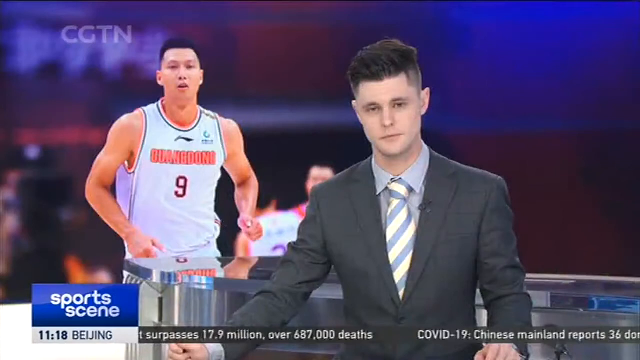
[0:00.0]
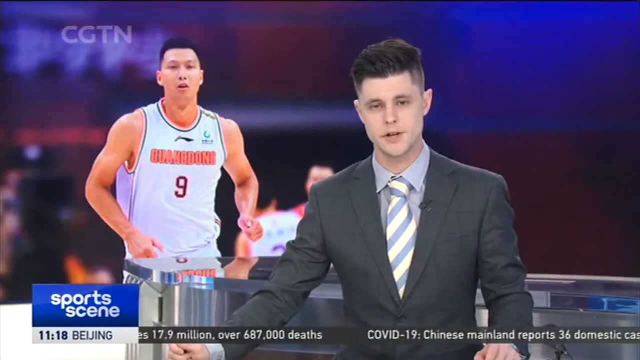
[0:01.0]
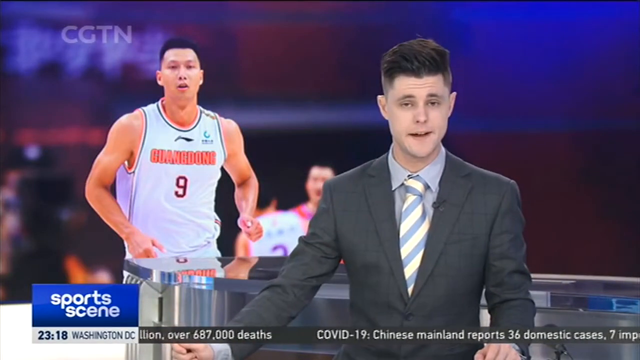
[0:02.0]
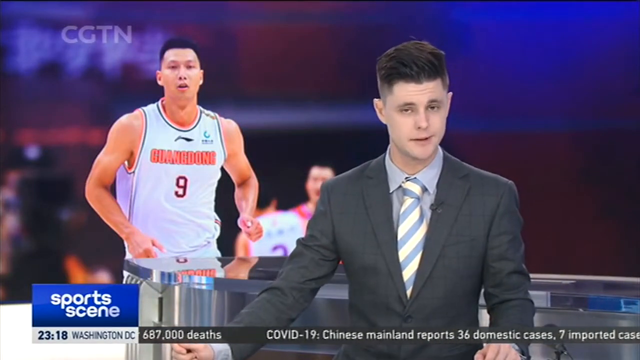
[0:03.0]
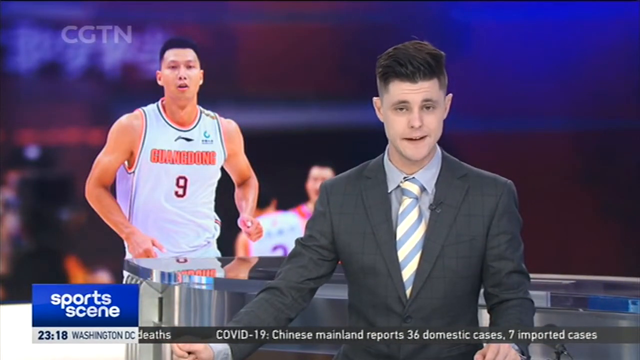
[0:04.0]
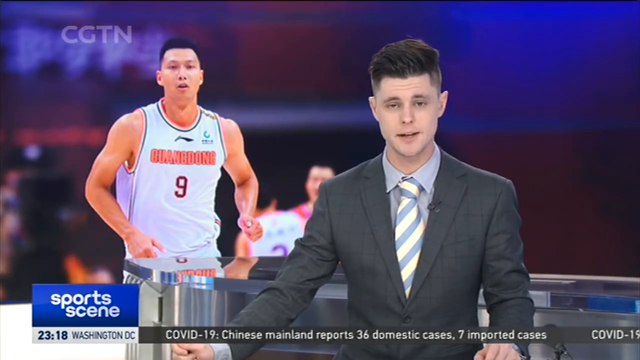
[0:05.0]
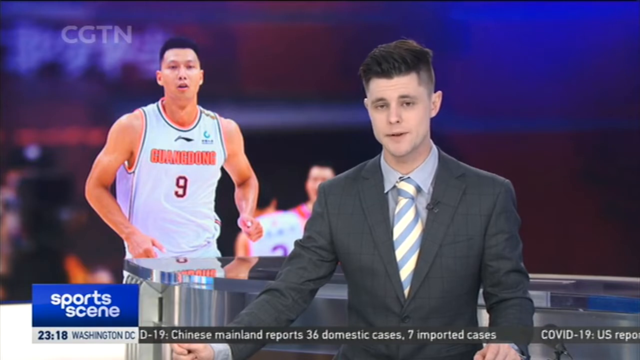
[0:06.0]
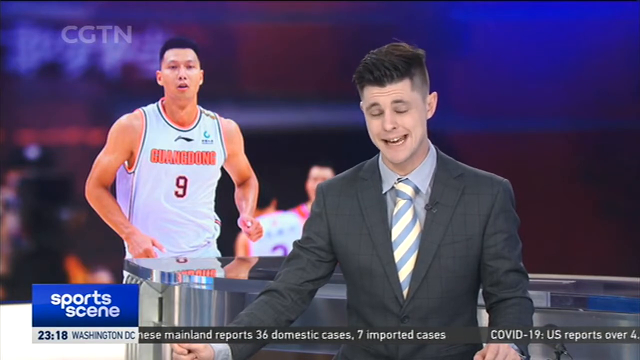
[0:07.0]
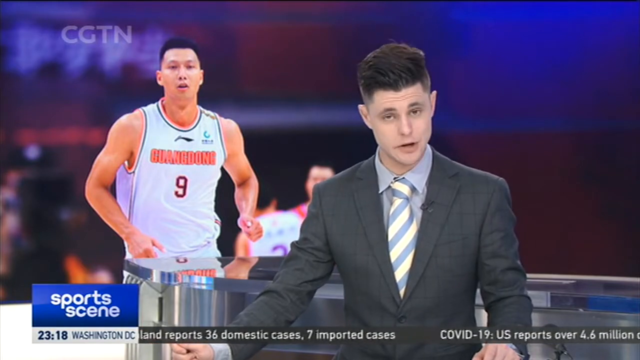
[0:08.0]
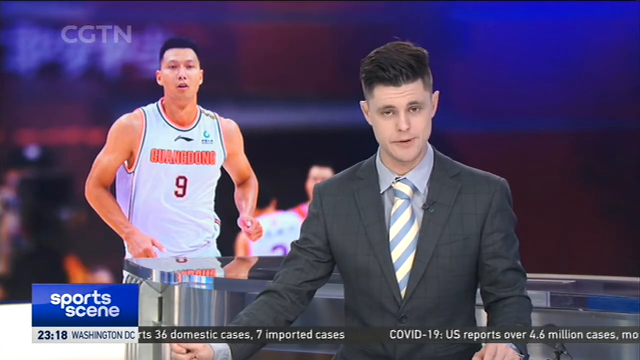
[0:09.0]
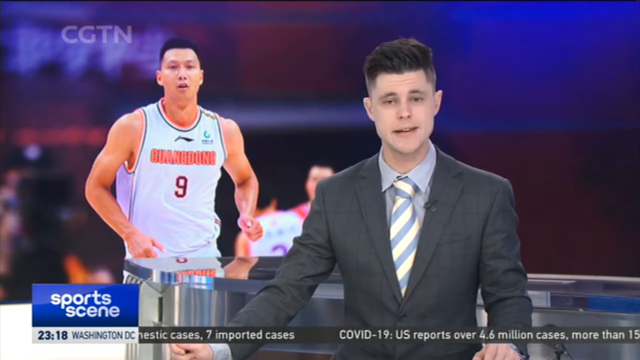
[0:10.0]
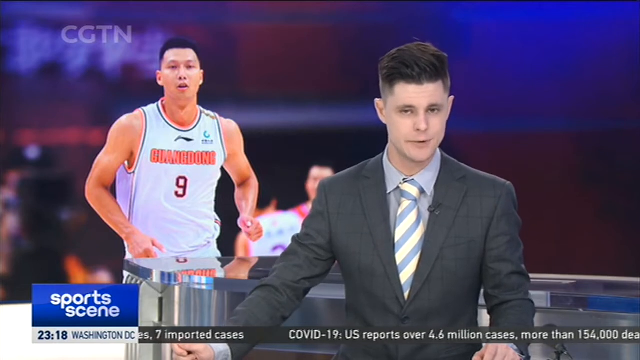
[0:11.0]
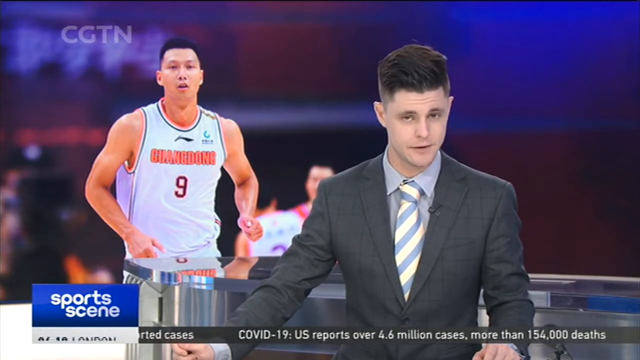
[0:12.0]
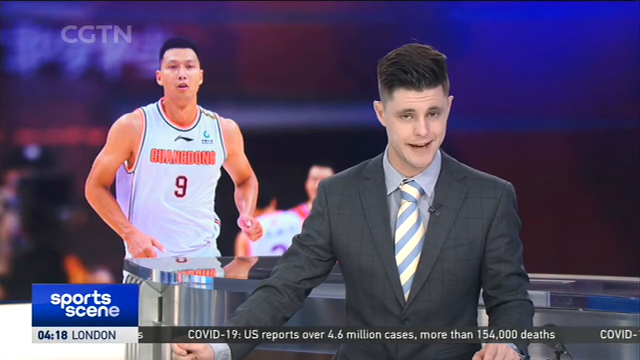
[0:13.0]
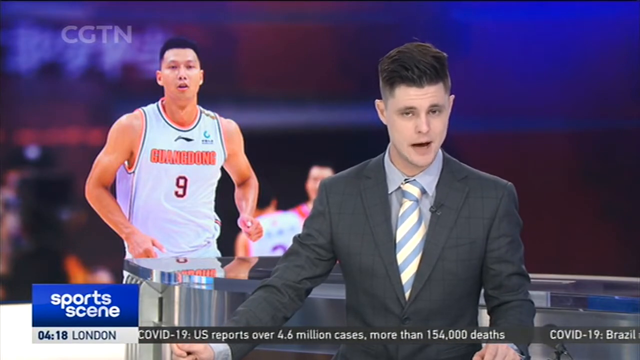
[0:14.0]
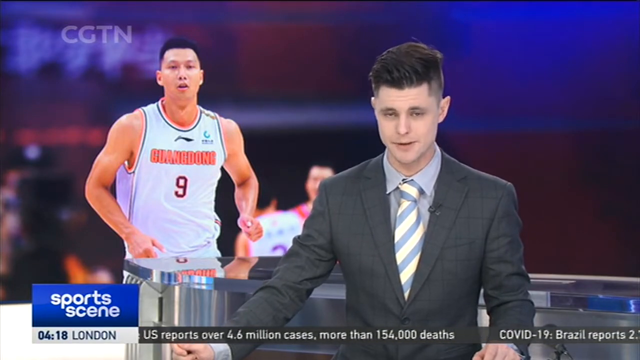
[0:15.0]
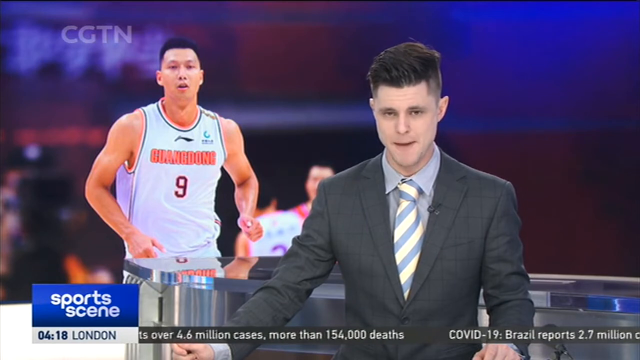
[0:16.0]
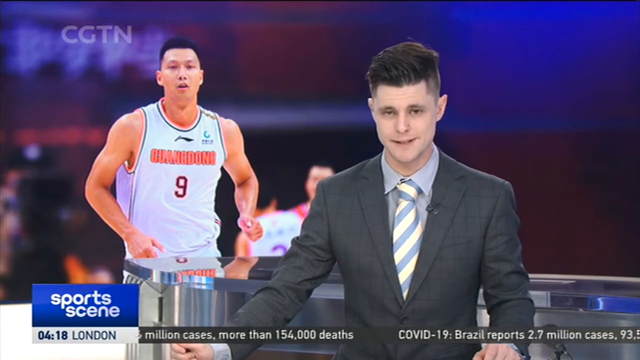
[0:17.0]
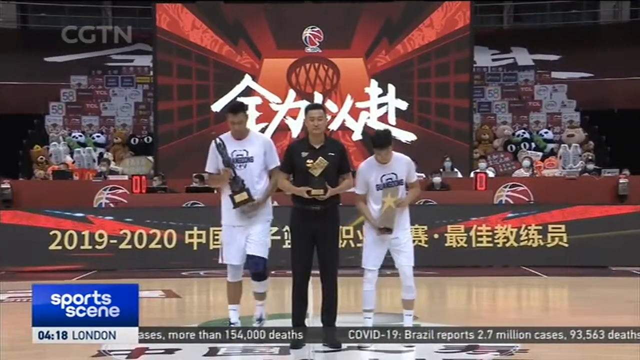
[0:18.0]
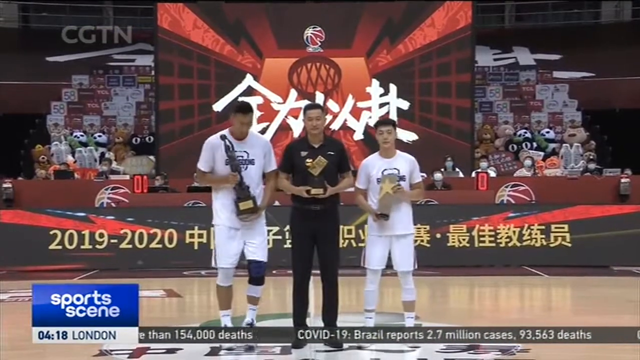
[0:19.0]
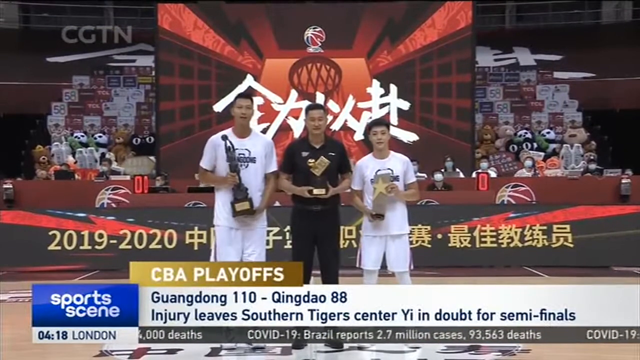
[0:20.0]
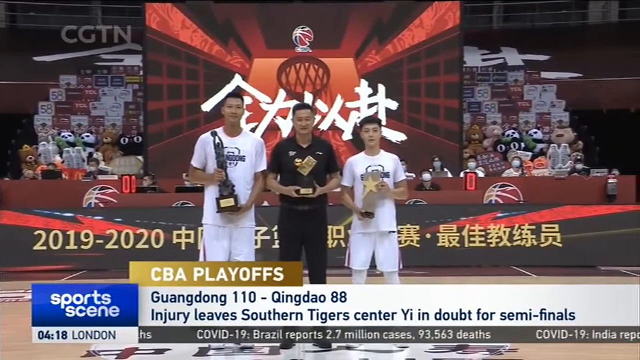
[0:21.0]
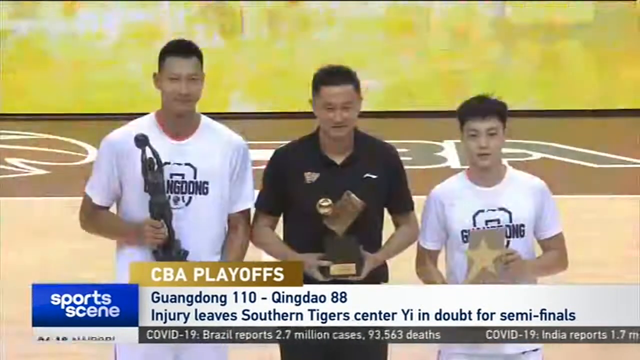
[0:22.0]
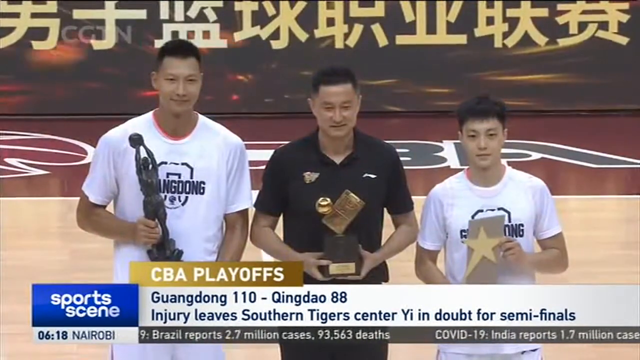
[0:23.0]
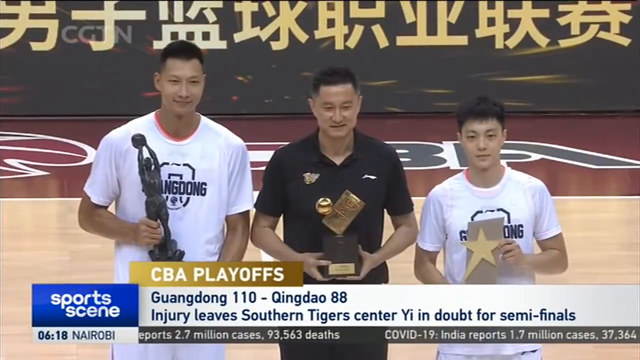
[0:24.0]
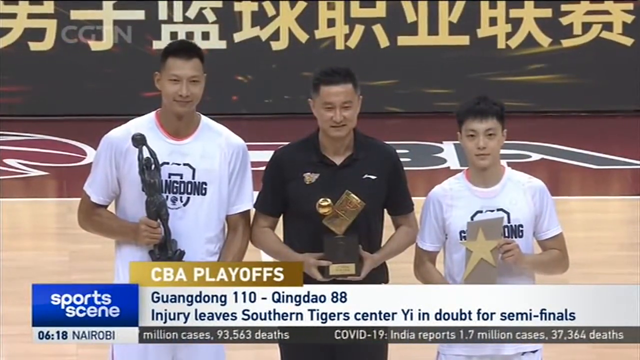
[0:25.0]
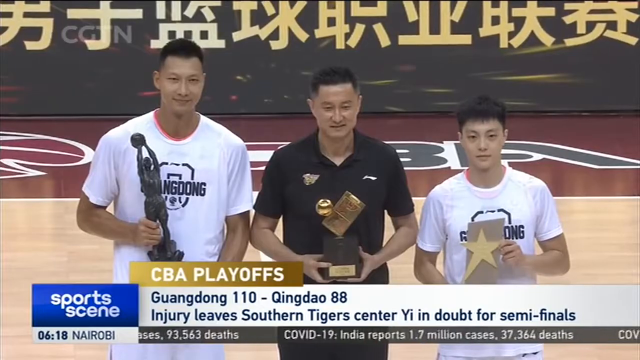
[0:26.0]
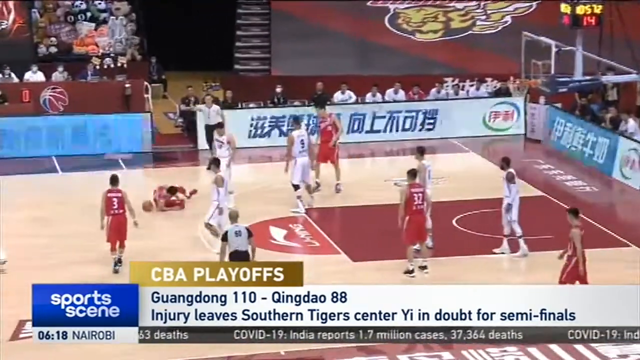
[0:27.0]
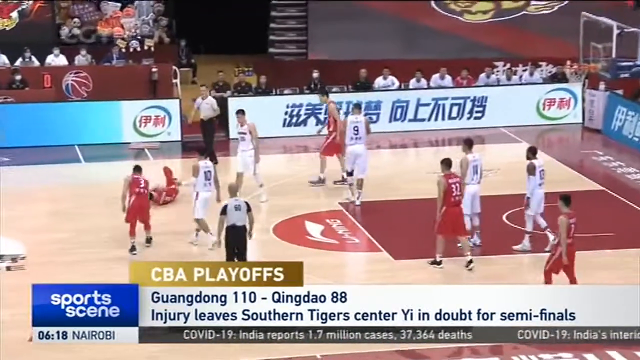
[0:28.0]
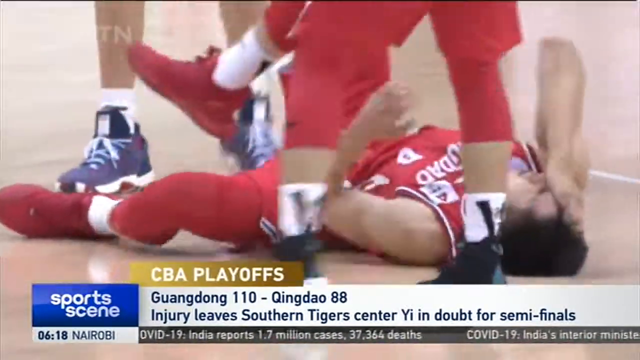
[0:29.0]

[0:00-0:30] A news reporter, apparently a fairly young man, stands looking at the camera, about to present the news. He wears a suit that is a little wrinkled just past the shoulders, around the upper arms, a blue and yellow diagonally striped tie, and a clip on his left collar. Behind him is what looks like an Asian basketball player in orange with a smaller black nine. The report apparently comes from Beijing, and "Sports Scene" appears at the bottom of the screen. The reporter speaks fairly quickly and looks a little disinterested, almost as if he would rather not be there; his mouth turns slightly to his right, his head is mostly pointed down, and he sometimes raises his eyebrows for emphasis. A video segment follows showing three Asian men: what looks like a coach in the middle, dressed in black, holding a trophy; a taller Asian man next to him holding a basketball trophy; and, on the right, a man about half a head shorter than the coach holding a long vertical trophy with a star on the front. Behind them is Asian writing reading "2019 2020" and an Asian banner, and a large TV in the background shows an animated basketball hoop and large white Asian writing behind their heads. A zoomed-in shot from another, higher angle cuts off their legs, showing only the top halves of their bodies; they smile slightly, and the coach apparently smiles the most. Then a basketball game is shown, in which a player in red appears to have sustained a leg injury and rolls around on the ground with his hands over his head.